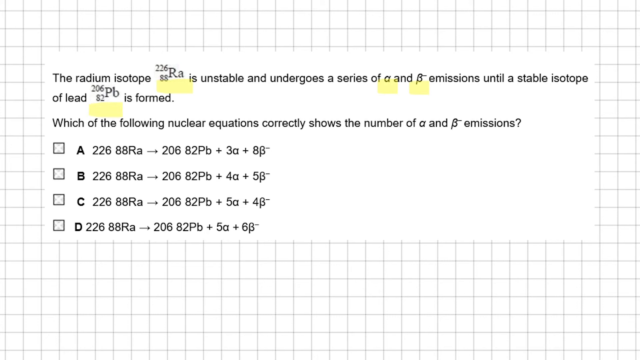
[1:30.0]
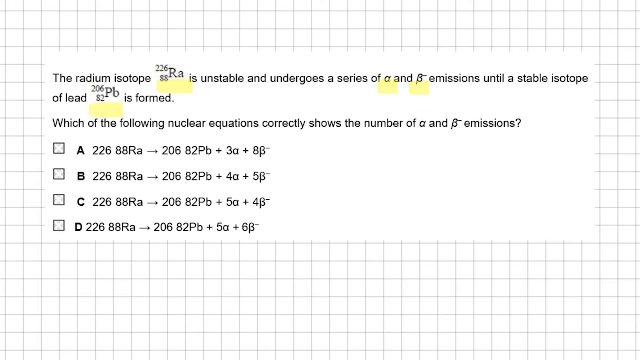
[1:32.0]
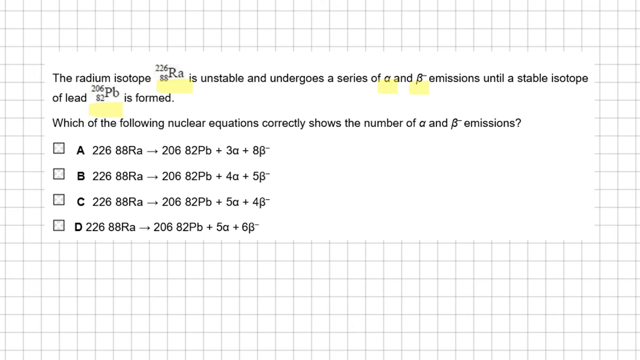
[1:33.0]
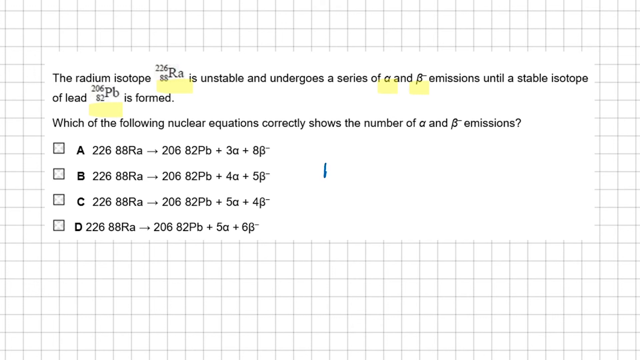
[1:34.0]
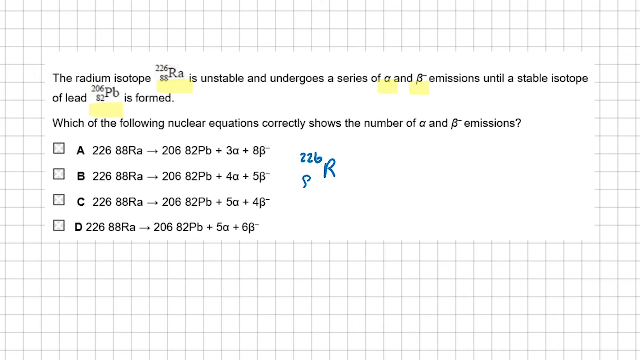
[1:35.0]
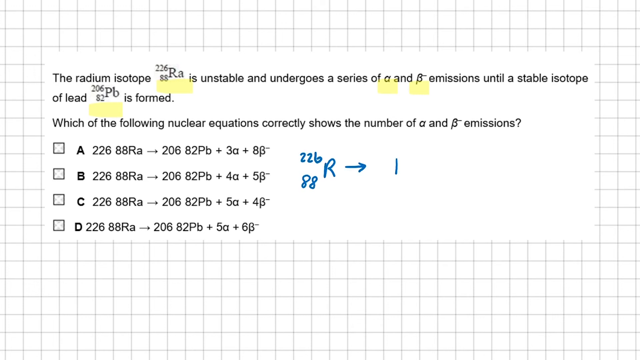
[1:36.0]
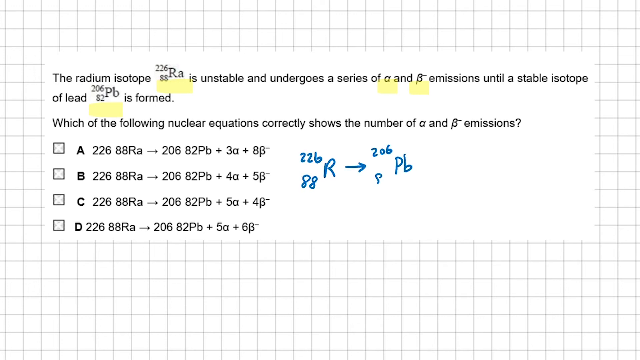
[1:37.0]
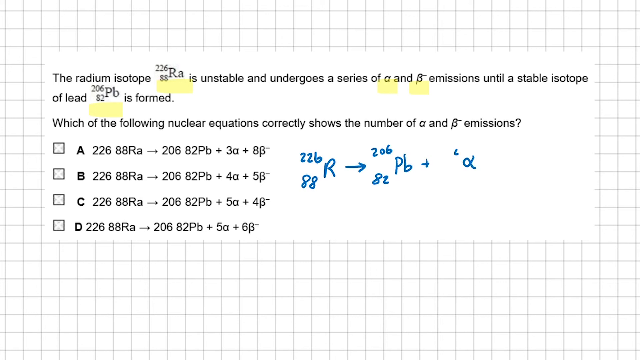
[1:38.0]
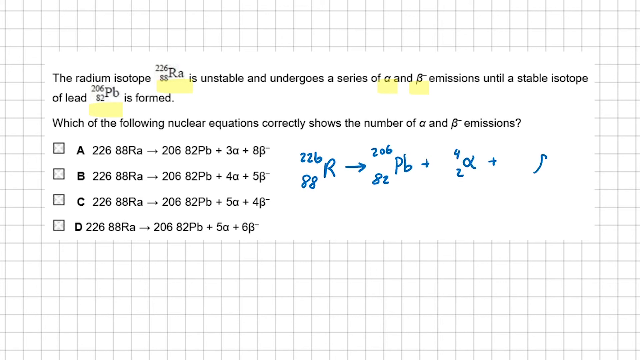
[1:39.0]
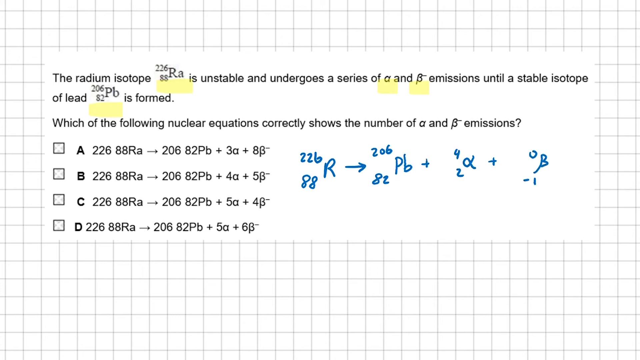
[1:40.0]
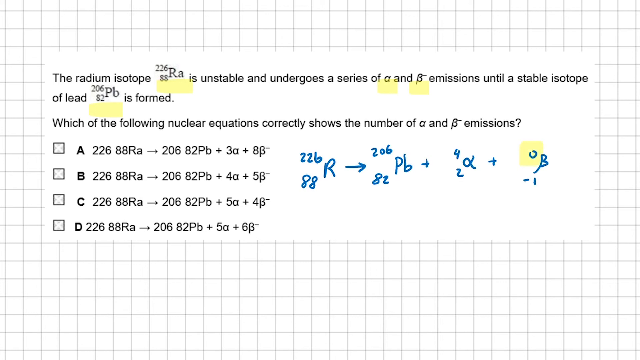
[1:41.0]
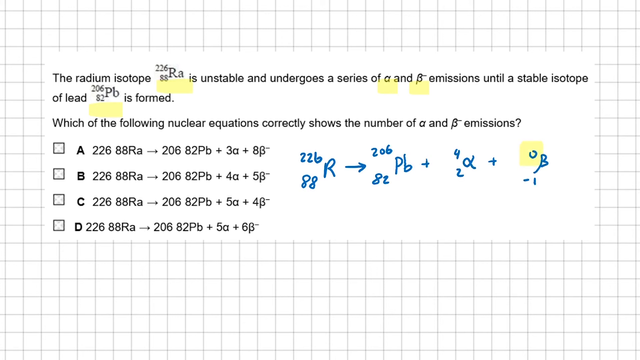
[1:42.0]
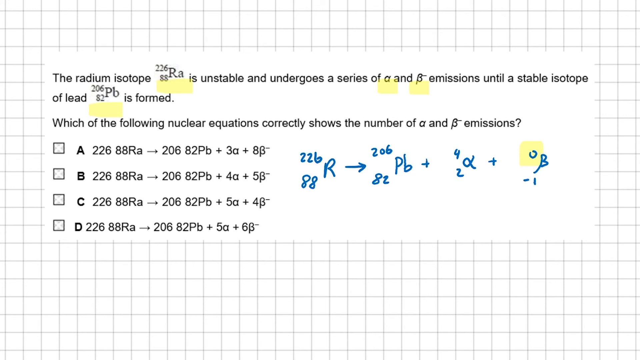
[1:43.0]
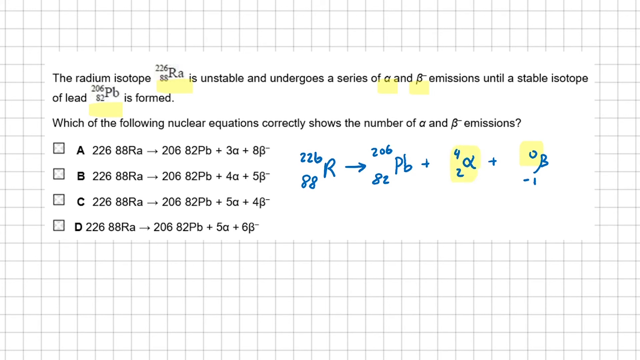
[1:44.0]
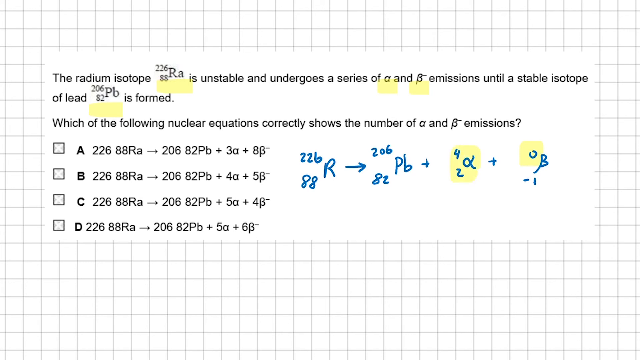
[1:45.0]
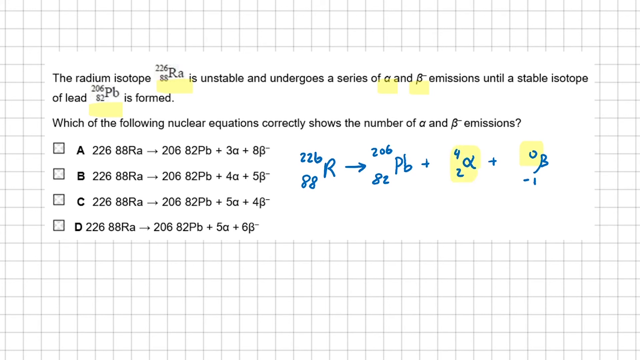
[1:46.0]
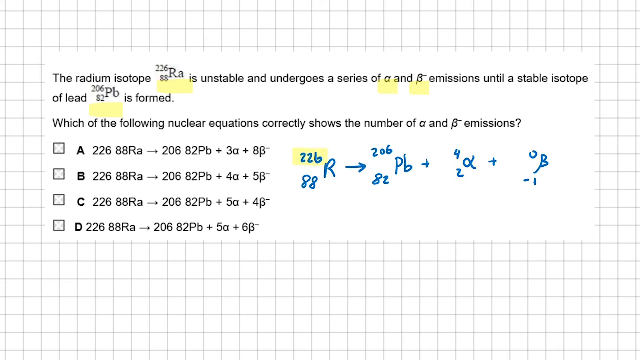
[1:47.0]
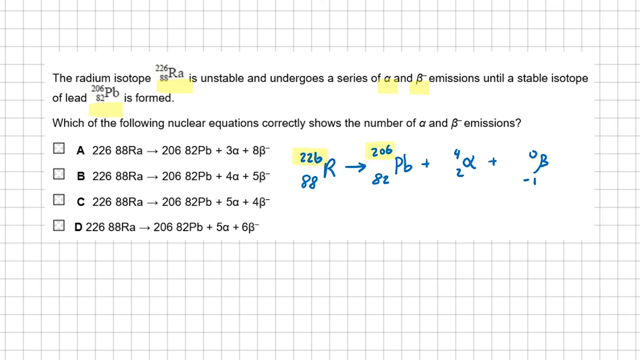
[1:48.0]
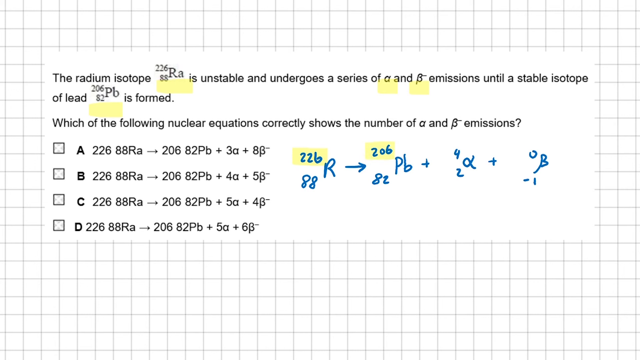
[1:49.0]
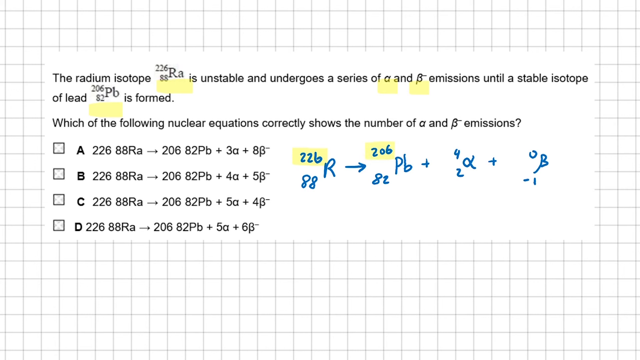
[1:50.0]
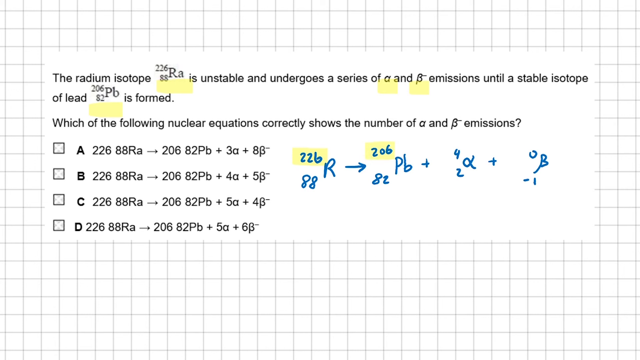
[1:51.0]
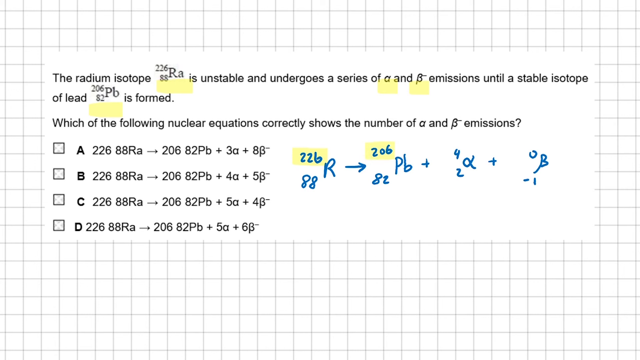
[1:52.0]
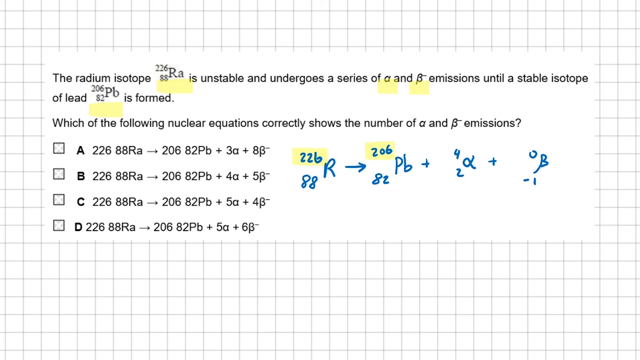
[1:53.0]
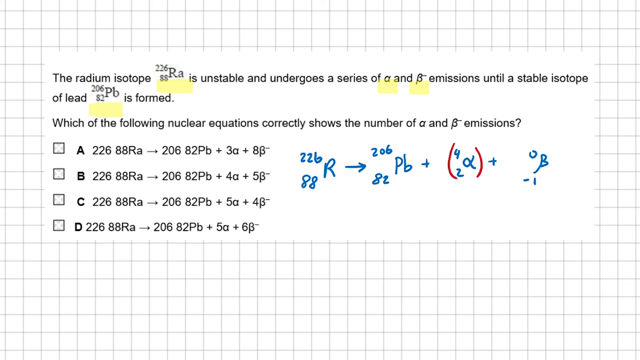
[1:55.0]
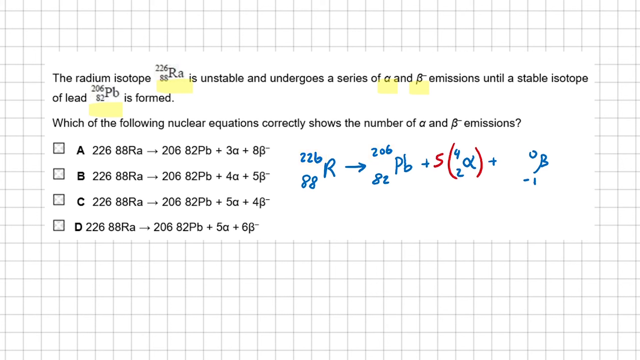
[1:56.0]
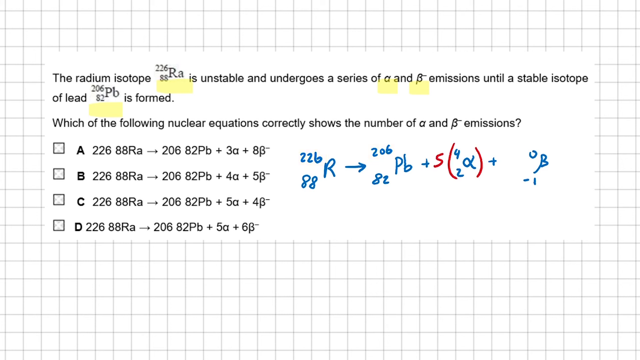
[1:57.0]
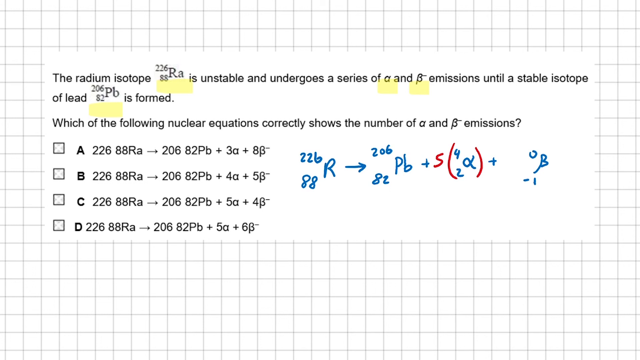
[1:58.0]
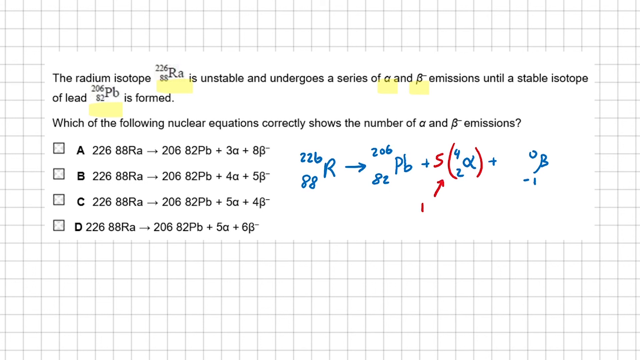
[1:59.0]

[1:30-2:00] A computer screen shows a black and white grid pattern background with a science question in front. The question concerns an unstable radium isotope that undergoes a series of emissions until a stable isotope of lead is formed, and asks which of the following nuclear equations correctly shows the number of emissions, offering four options, A, B, C, and D, each with a checkbox beside it. Four parts of the question are underlined in yellow highlighter, likely to indicate their significance. In blue pen, a scientific equation is started in the empty space. Part of the written equation is highlighted, those highlights are removed, and other parts are highlighted as if to emphasize them. A red marker puts brackets around one part and adds a 5 in front, then puts an arrow underneath with the number 10.